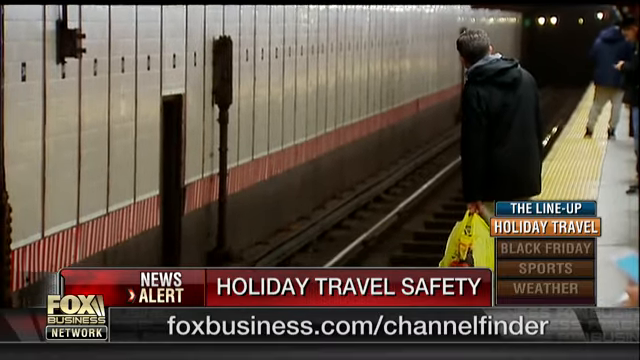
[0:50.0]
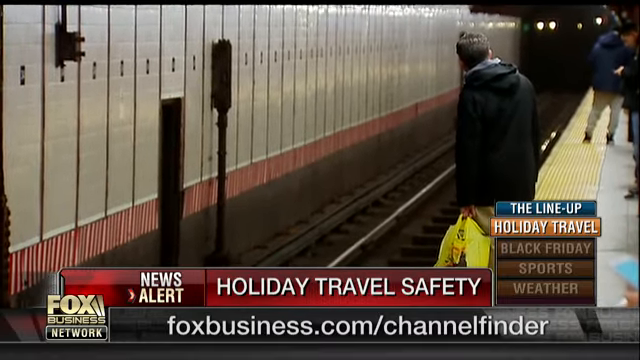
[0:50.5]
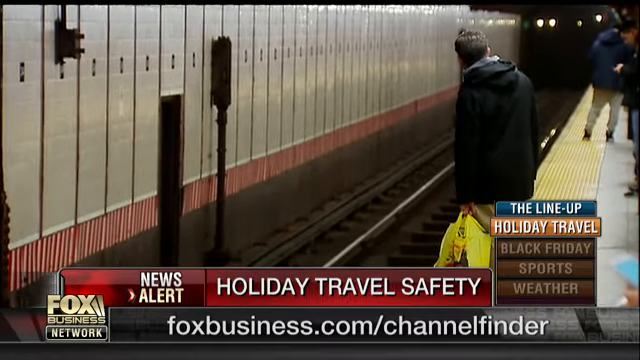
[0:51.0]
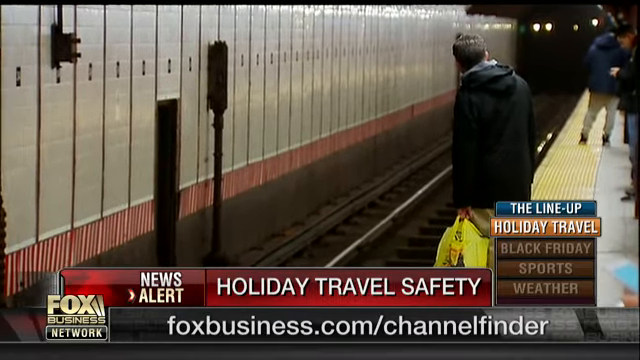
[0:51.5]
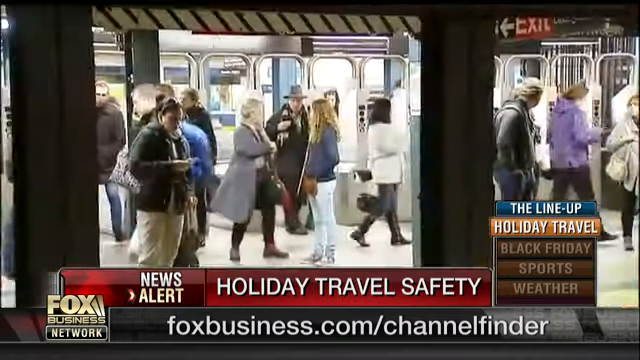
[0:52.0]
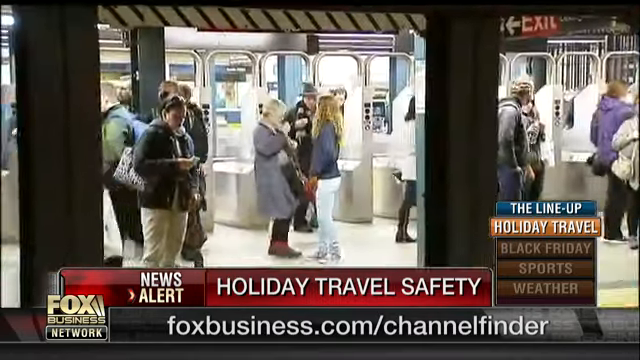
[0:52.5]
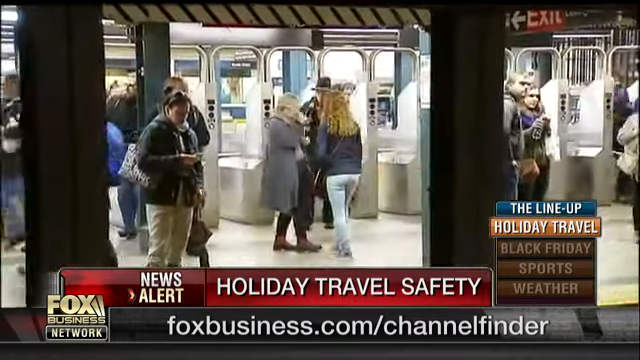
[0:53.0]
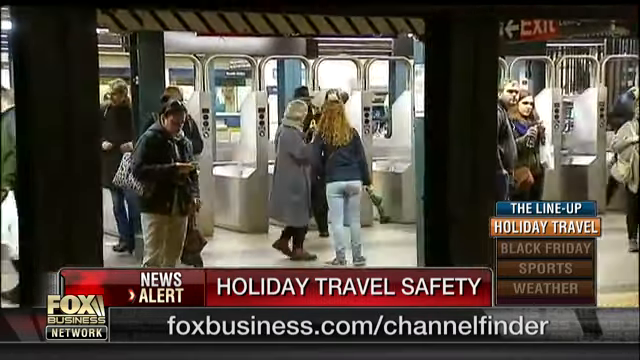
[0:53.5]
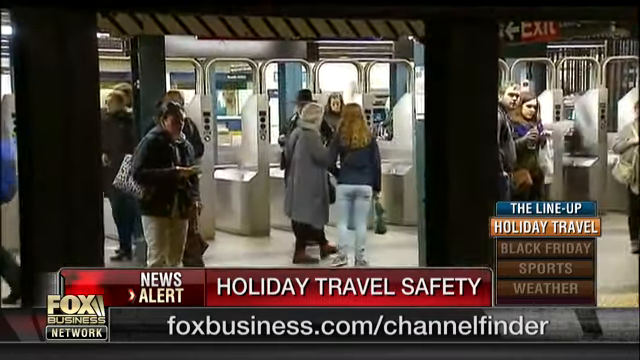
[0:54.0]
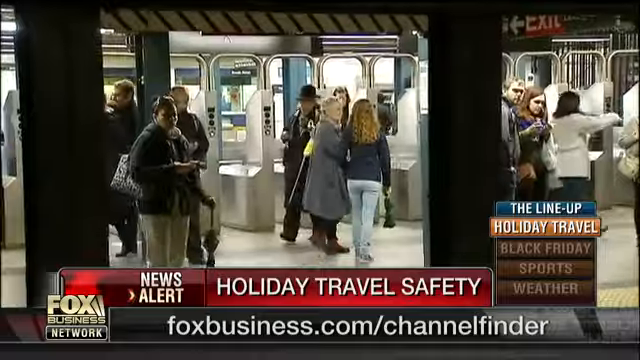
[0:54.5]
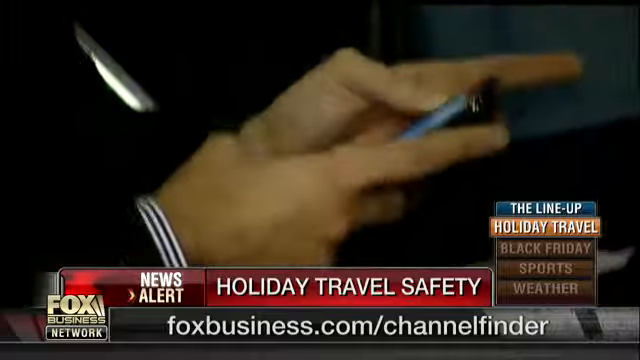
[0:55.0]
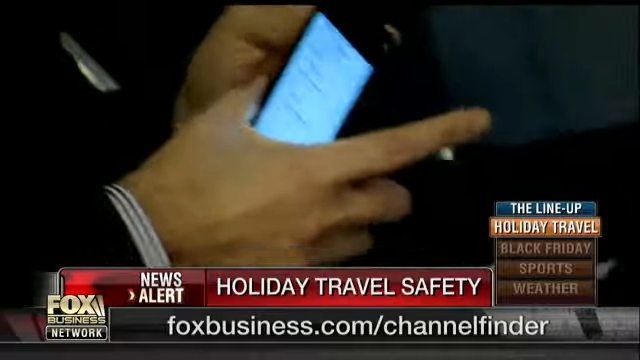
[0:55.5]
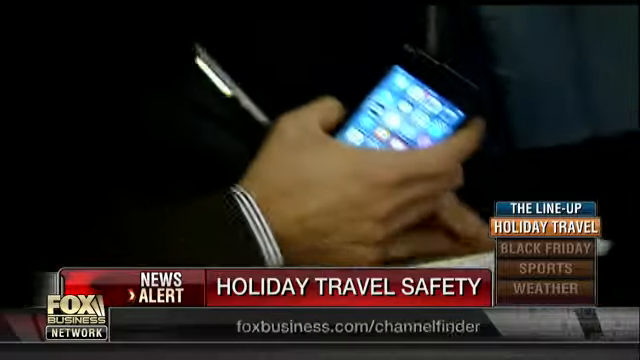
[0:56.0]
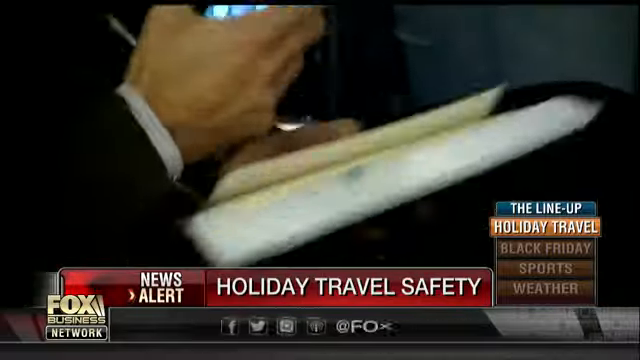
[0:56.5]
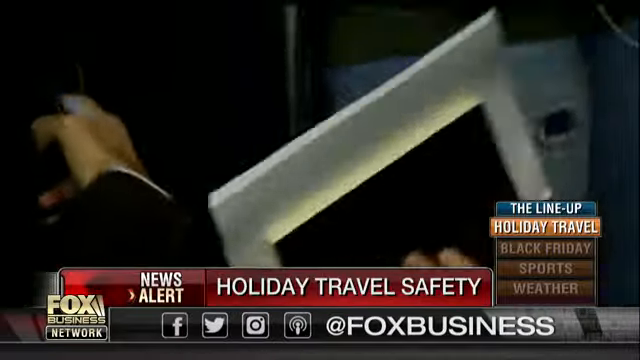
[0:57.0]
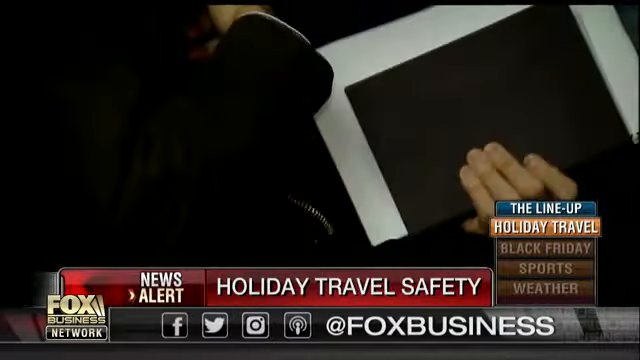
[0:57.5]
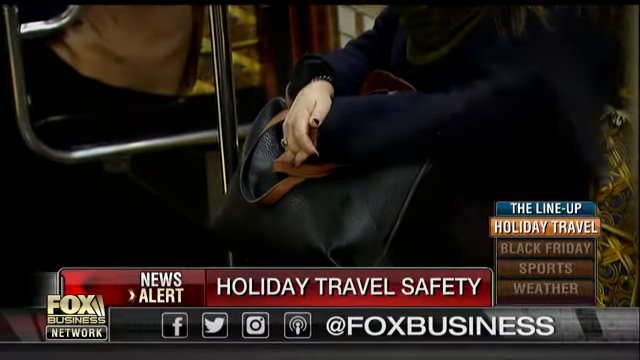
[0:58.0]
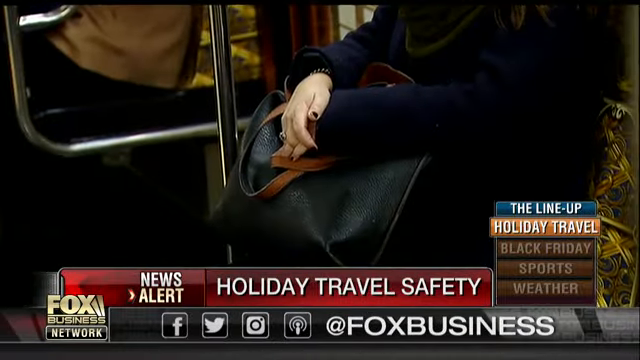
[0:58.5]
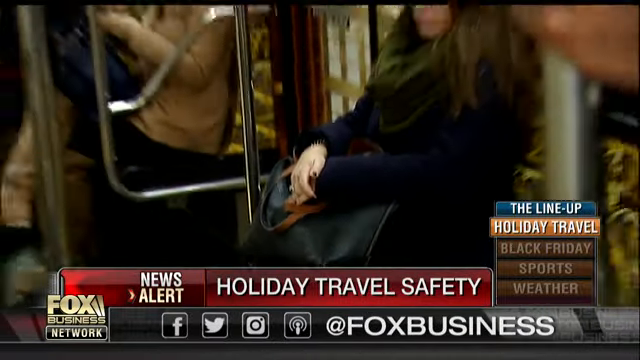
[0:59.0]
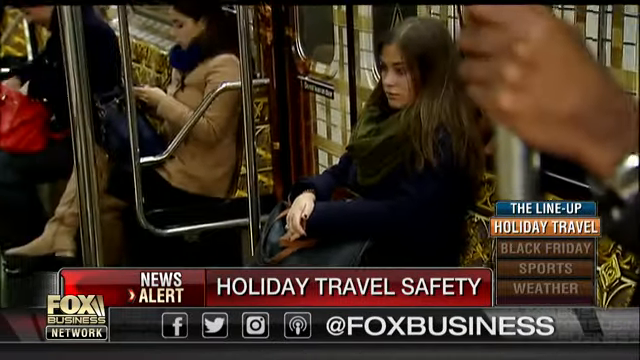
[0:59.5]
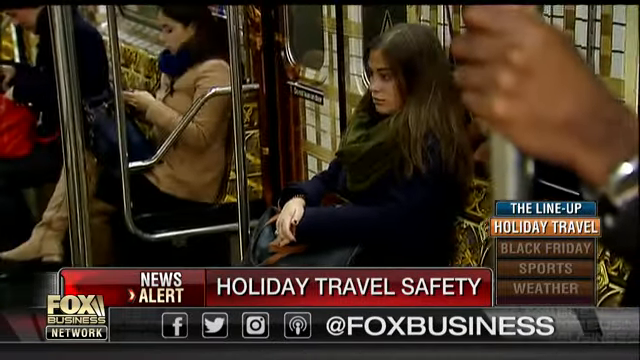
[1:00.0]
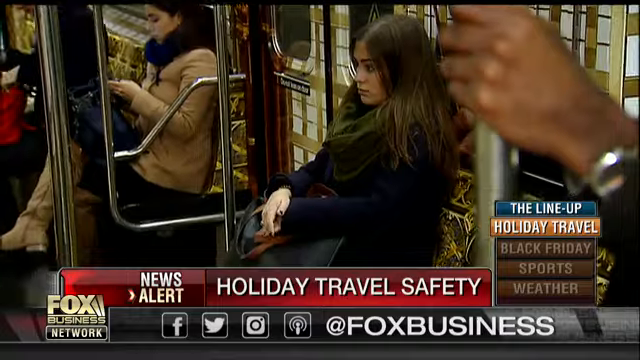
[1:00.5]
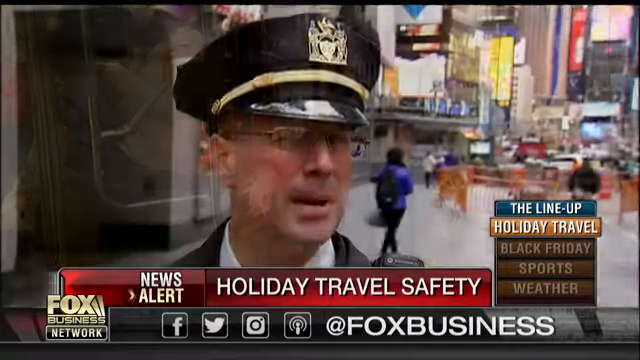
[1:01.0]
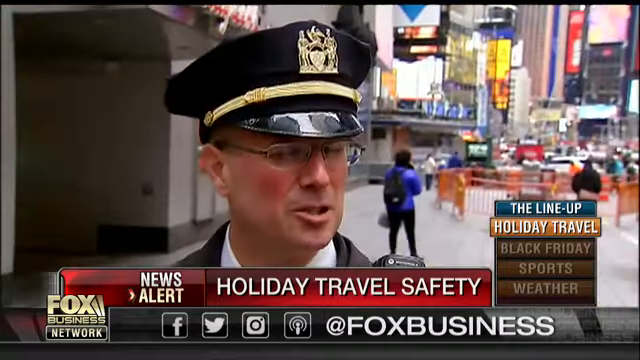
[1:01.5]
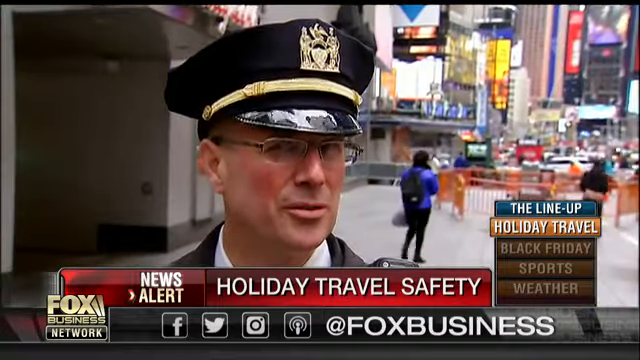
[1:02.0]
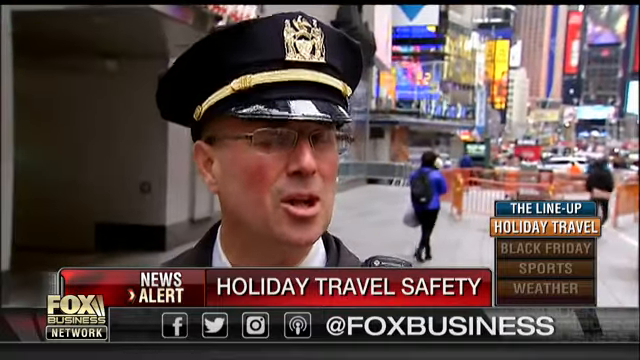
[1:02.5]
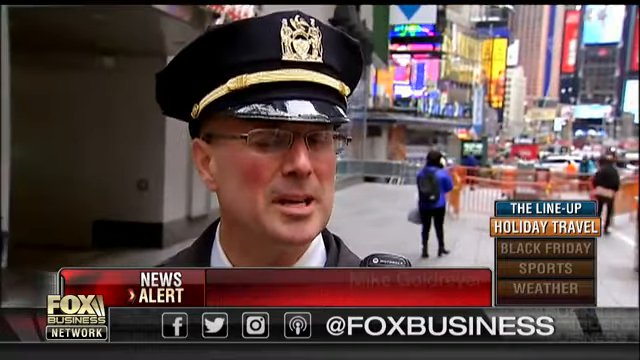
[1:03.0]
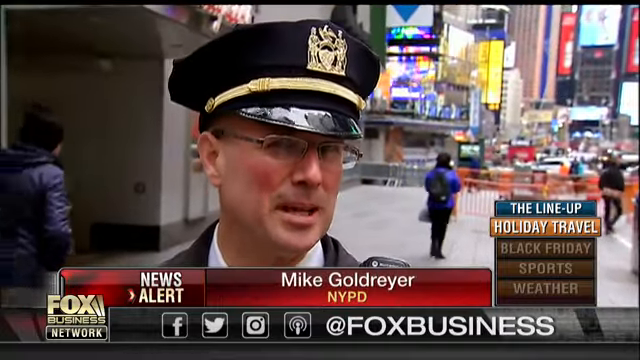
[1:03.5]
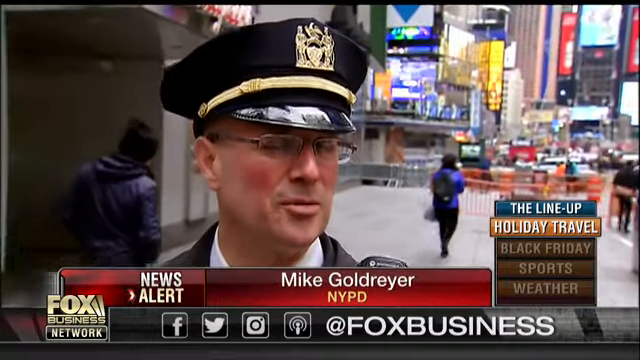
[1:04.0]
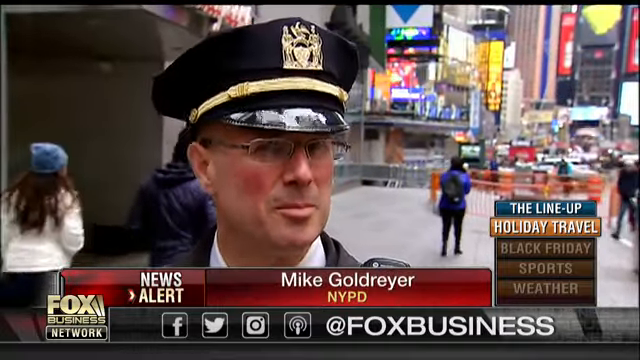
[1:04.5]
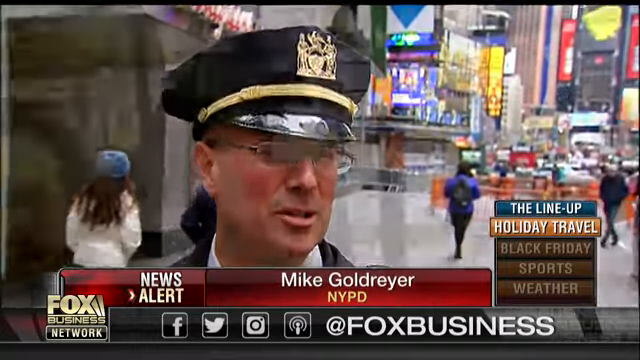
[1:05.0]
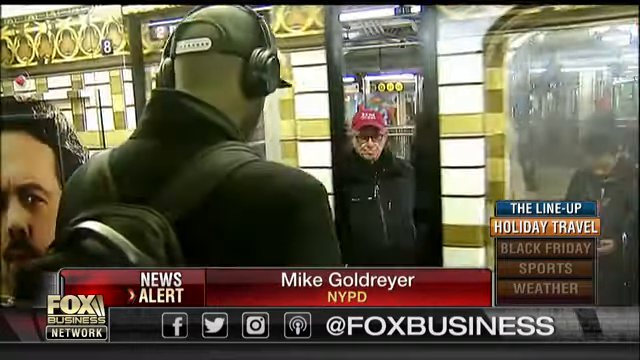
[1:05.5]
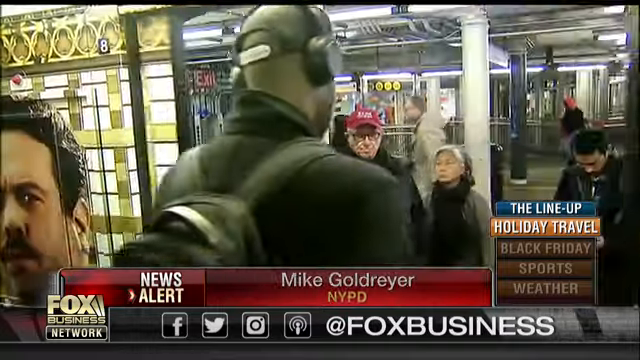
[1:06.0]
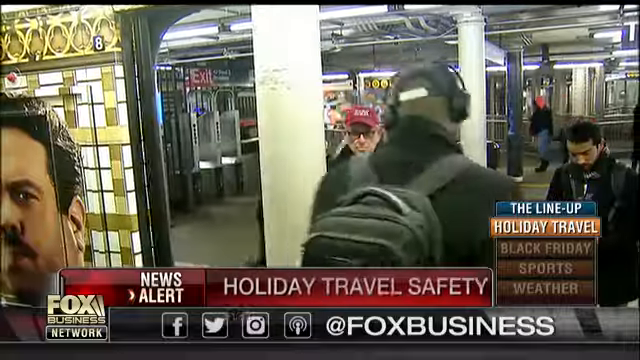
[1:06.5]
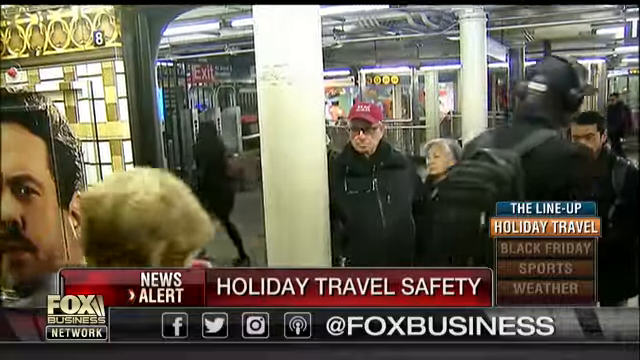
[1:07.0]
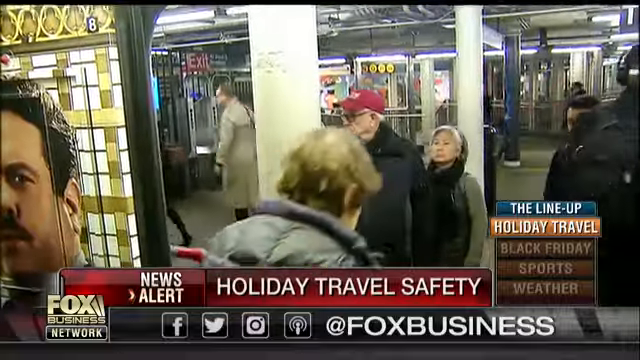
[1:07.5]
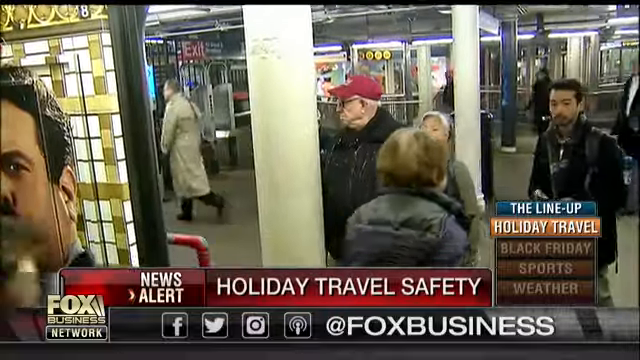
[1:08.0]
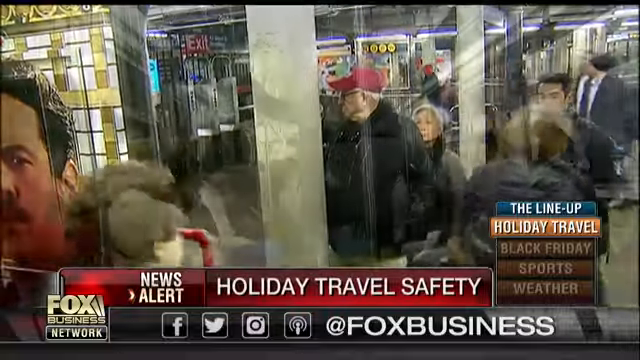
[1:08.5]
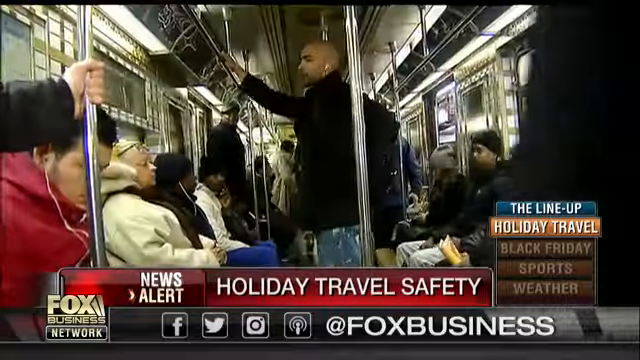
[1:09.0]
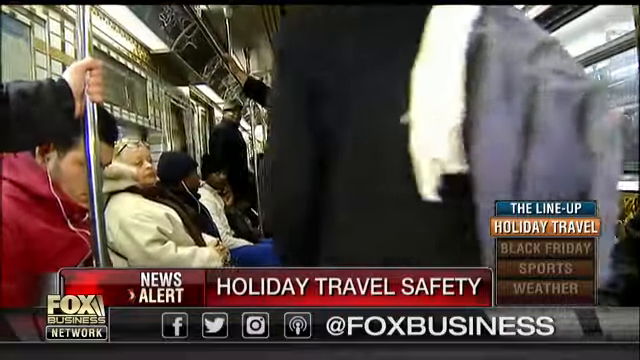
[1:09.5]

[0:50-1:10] A man looks down the subway tracks as if trying to predict when the next train is coming. The next shot shows a busy subway station with people moving around. It cuts to a man's hands holding a mobile phone and what looks like a diary with some paperwork inside. A lady sits on the subway, clutching her bag. Another NYPD police officer, called Mike Goldrayer, talks to the camera, with a busy street scene behind him: lots of people walking around and lots of signs and lights. Back in the subway, a man wearing headphones and a backpack waits to exit. The next scene shows the busy subway train.